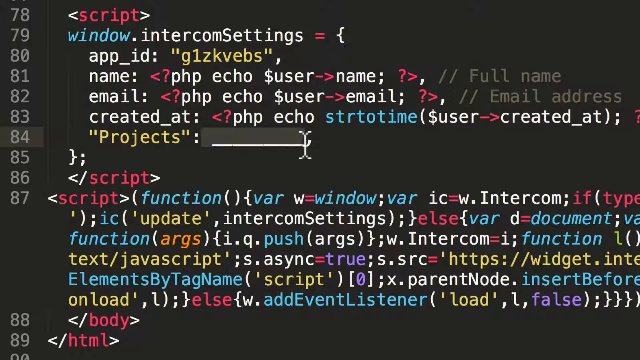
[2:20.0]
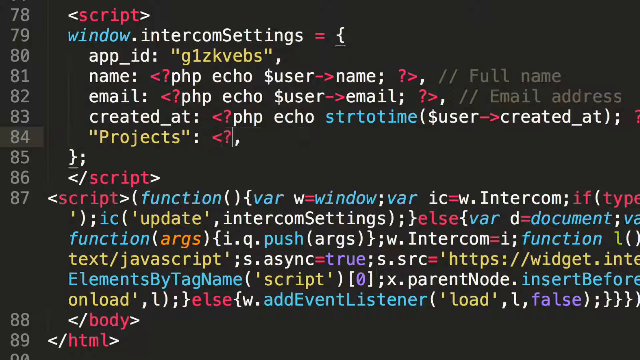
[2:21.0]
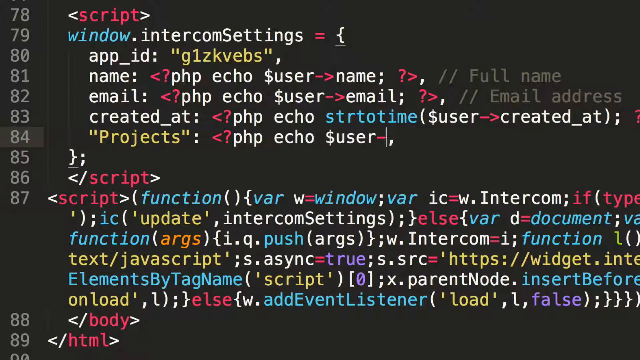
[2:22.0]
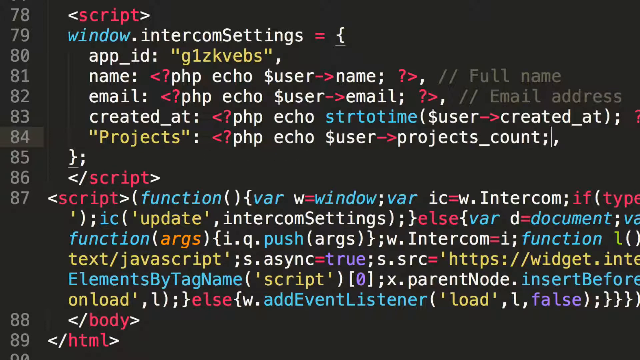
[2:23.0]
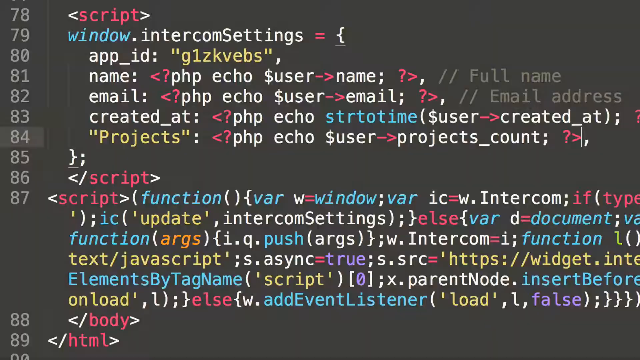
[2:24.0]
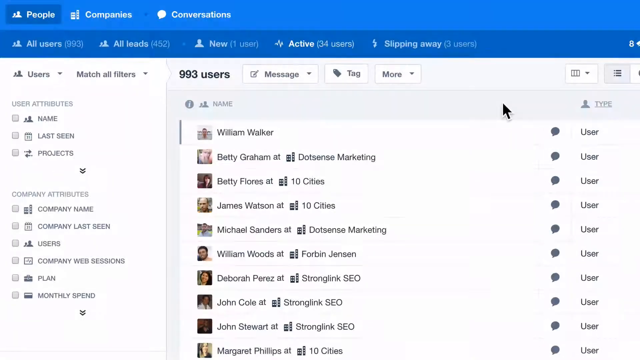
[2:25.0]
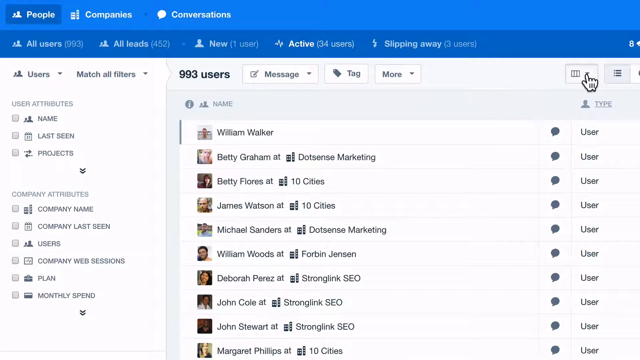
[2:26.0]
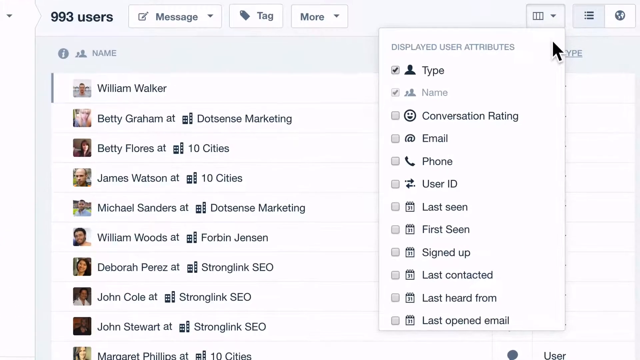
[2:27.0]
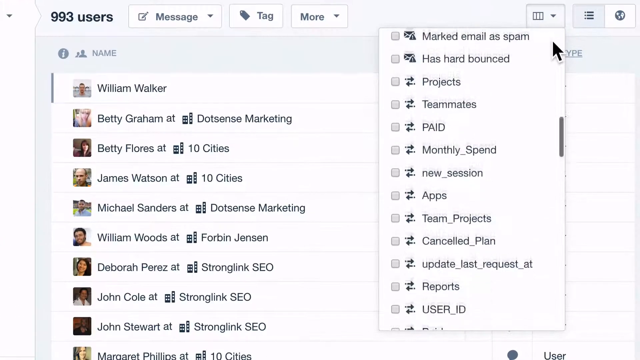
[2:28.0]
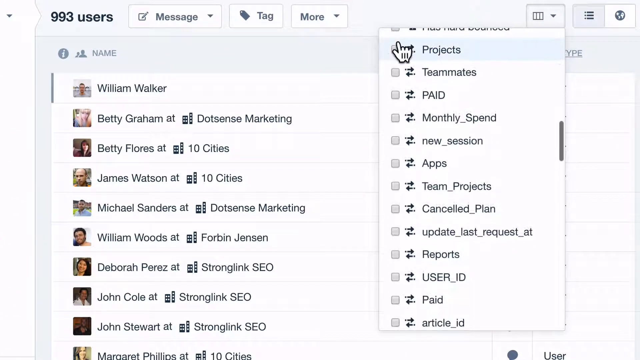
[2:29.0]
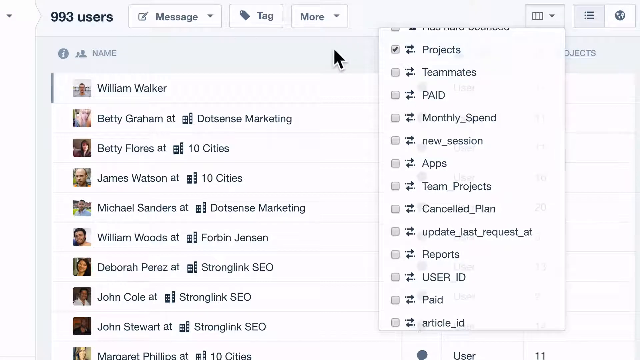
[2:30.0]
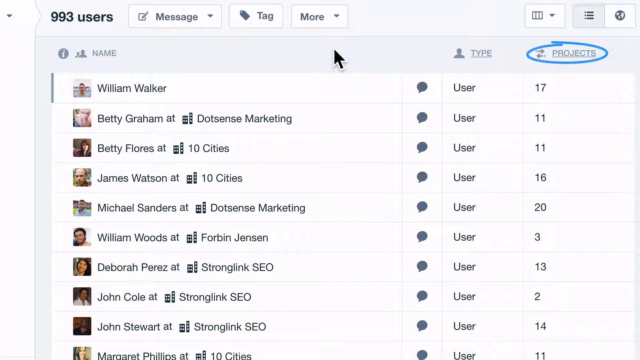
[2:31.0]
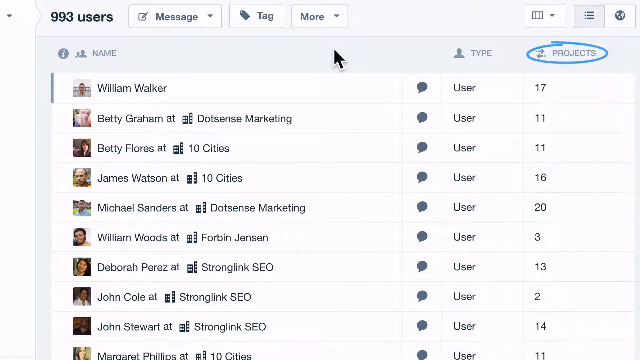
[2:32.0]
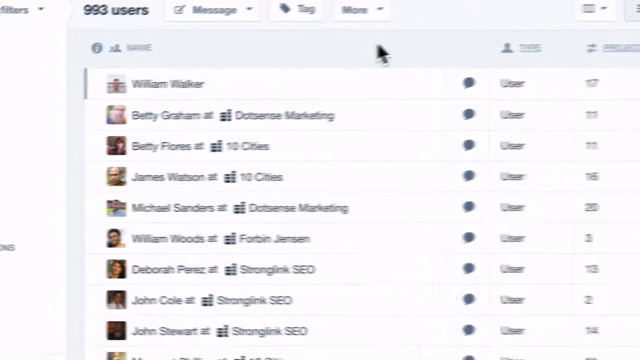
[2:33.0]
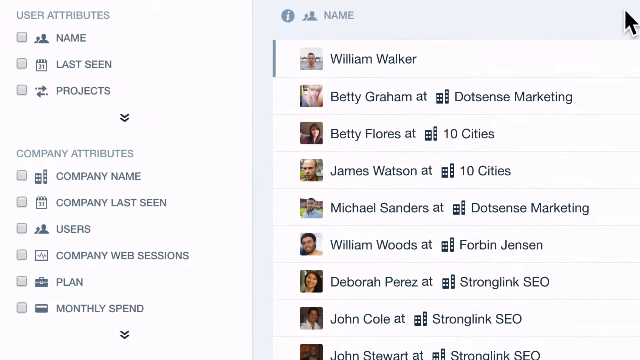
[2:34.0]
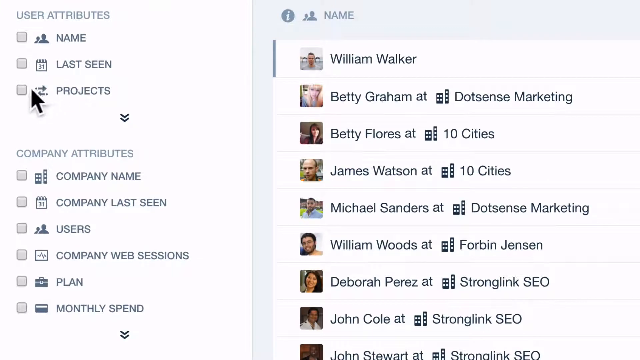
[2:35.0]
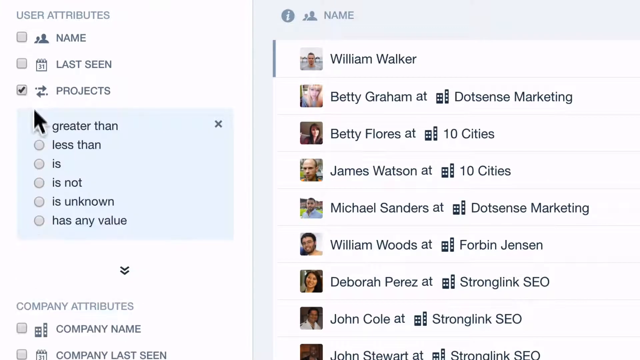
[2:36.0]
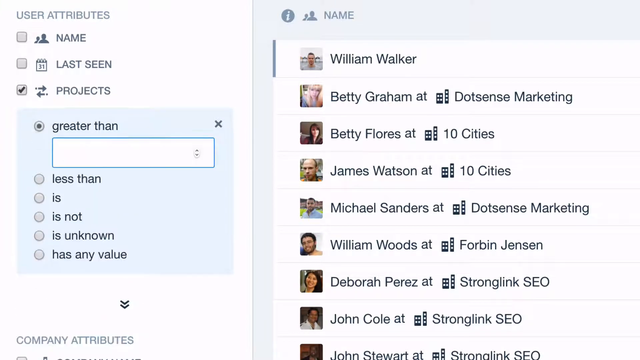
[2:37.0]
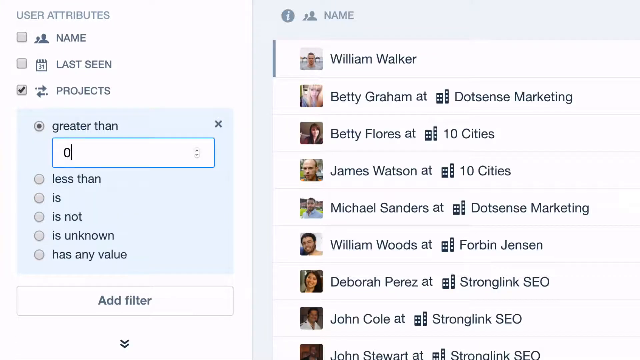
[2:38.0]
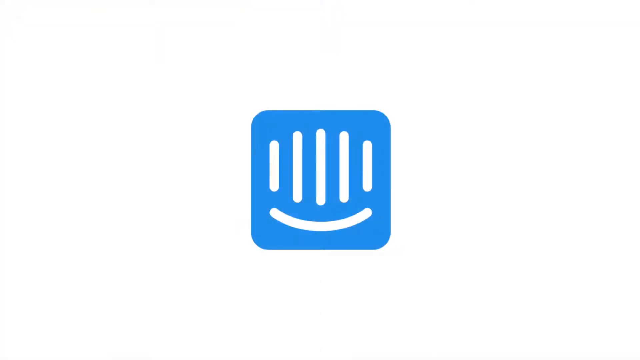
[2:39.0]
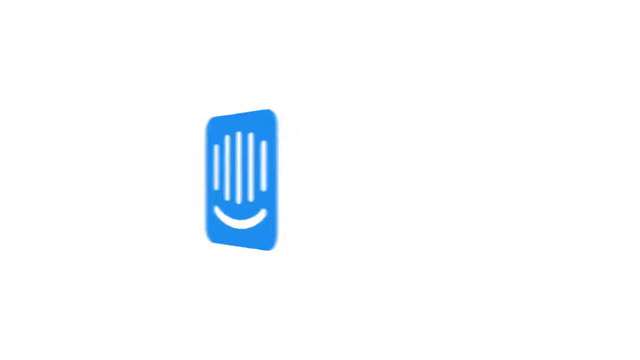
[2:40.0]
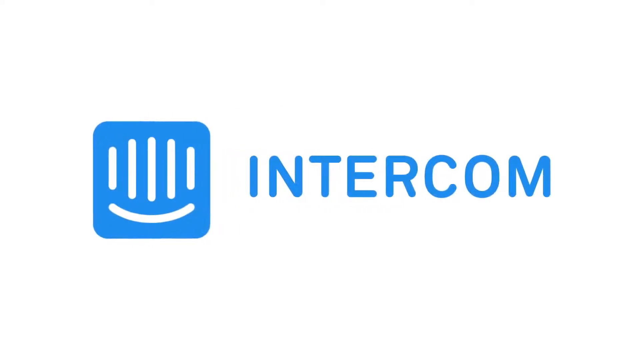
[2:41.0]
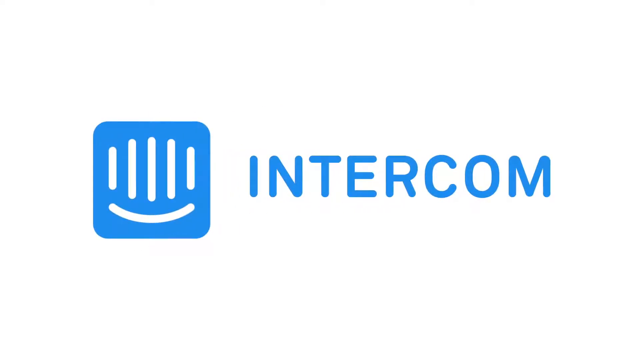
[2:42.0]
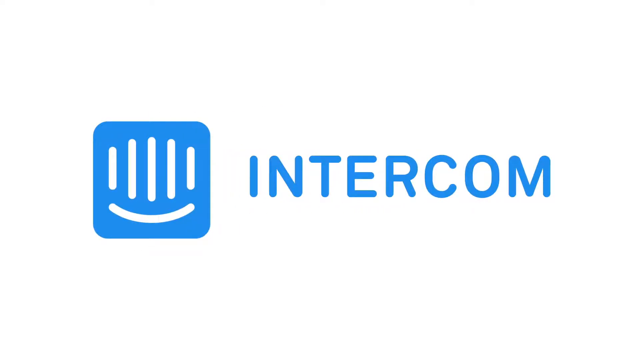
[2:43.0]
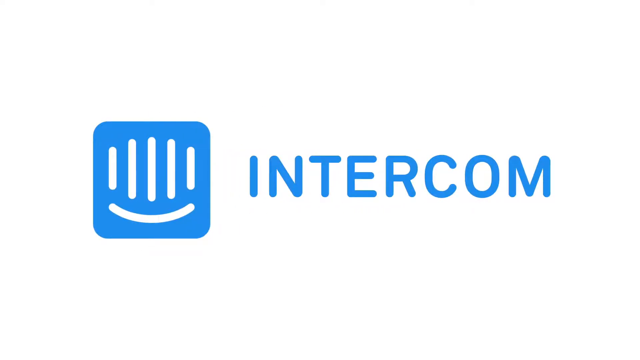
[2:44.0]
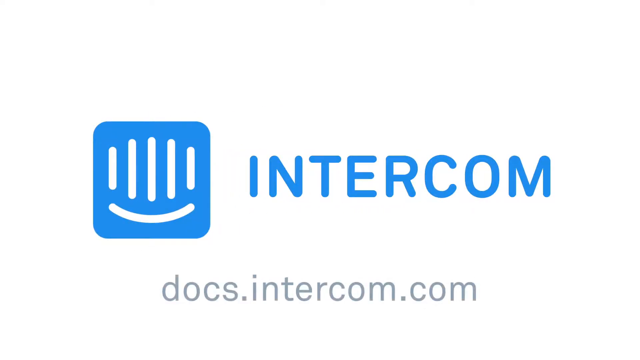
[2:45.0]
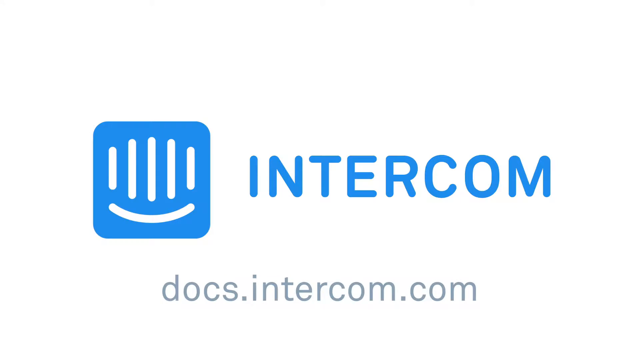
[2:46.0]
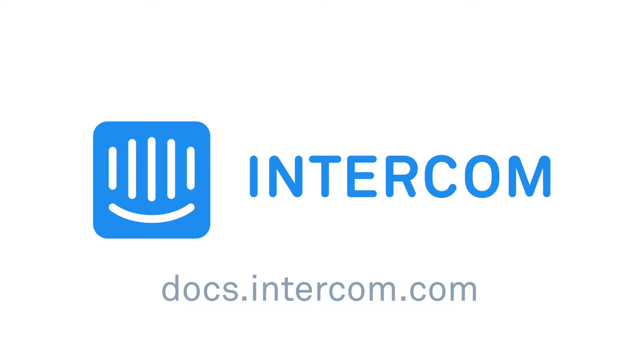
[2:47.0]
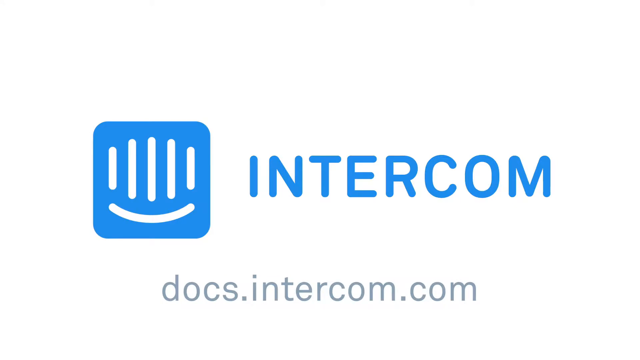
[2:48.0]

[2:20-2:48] A rectangle with a black background and multiple colors shows code from line 73 down, with the word "projects" in red. Typing happens on multiple lines, and then the next screen looks like email, with columns; the first is a small column with pictures. Back in the scripts, typing happens on line 84, reading "project php echo user," an arrow, and "projects_d." The scripts run from line 78 down to line 87. Line 87 has a rather long script with multiple symbols between the words, including "window" and "w.intercom;". Multiple colors continue down six lines, with words in red, blue, yellow, orange and purple, and other words such as "push," "JavaScript" and "script." Line 83 shows "user created at."